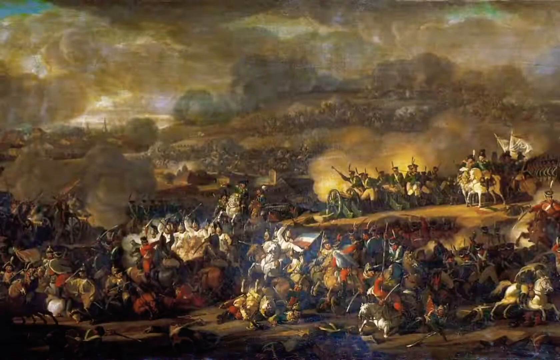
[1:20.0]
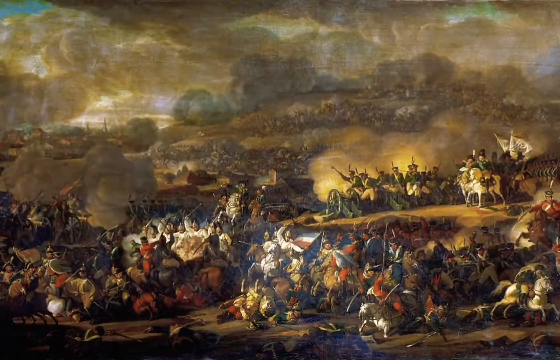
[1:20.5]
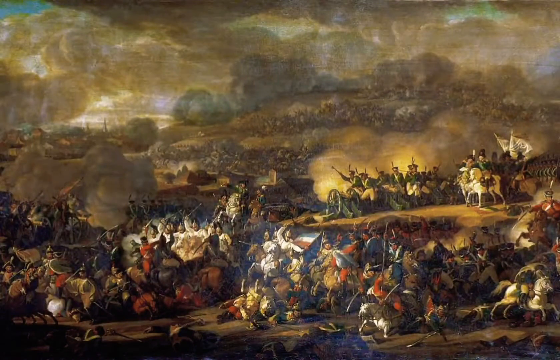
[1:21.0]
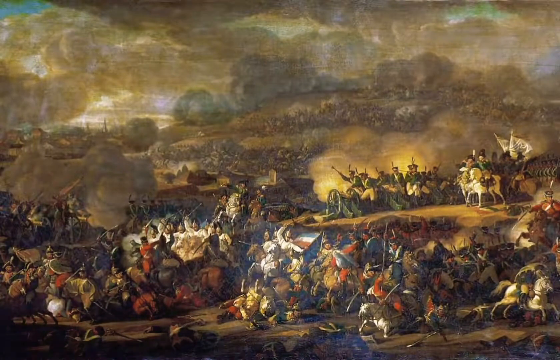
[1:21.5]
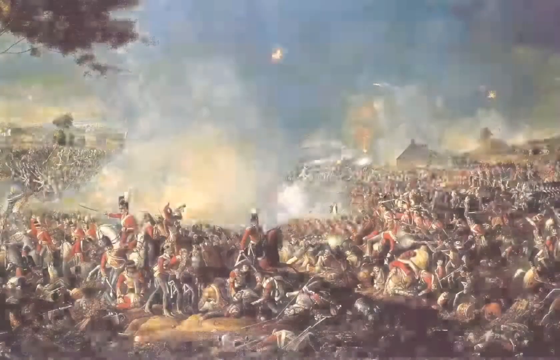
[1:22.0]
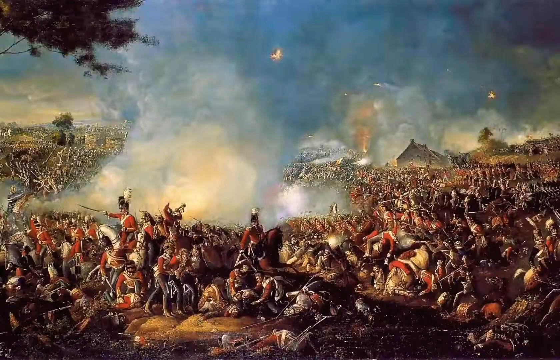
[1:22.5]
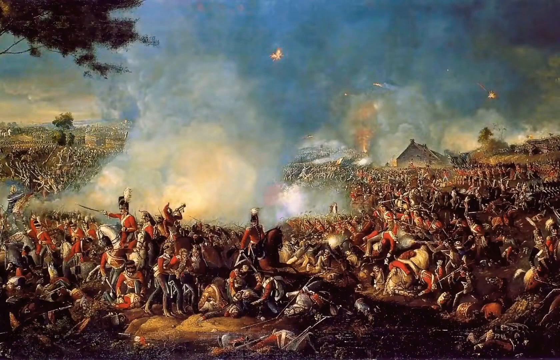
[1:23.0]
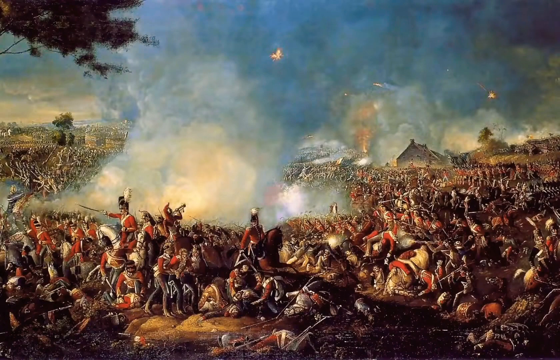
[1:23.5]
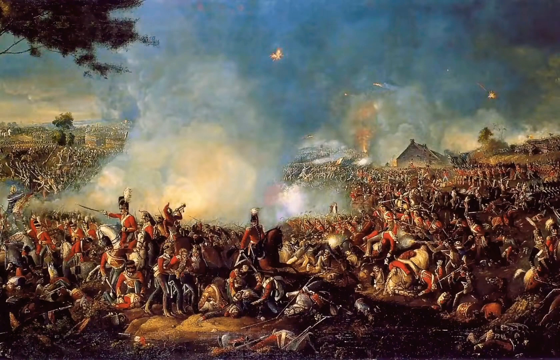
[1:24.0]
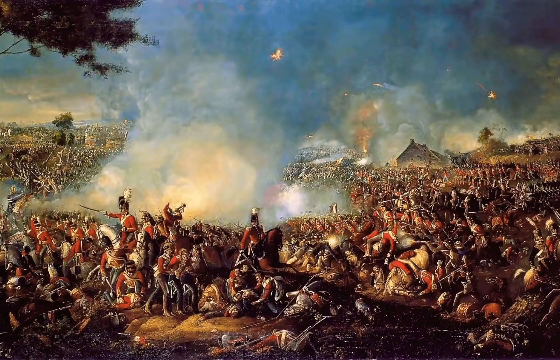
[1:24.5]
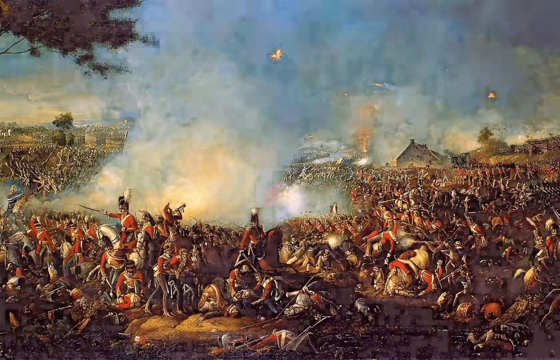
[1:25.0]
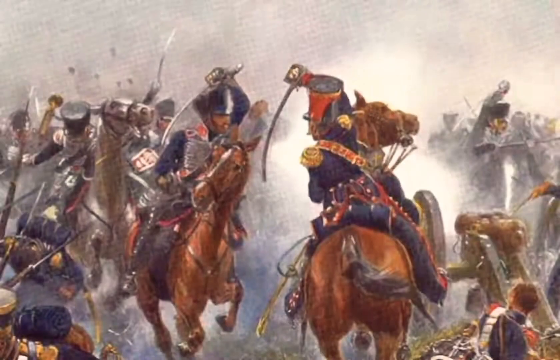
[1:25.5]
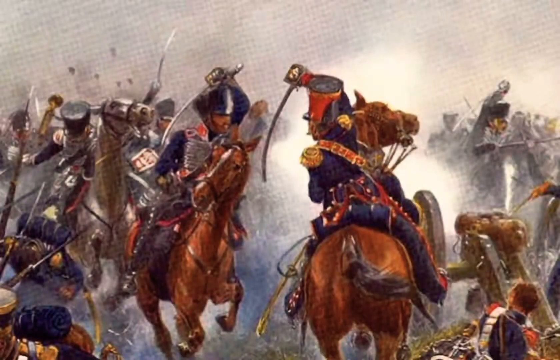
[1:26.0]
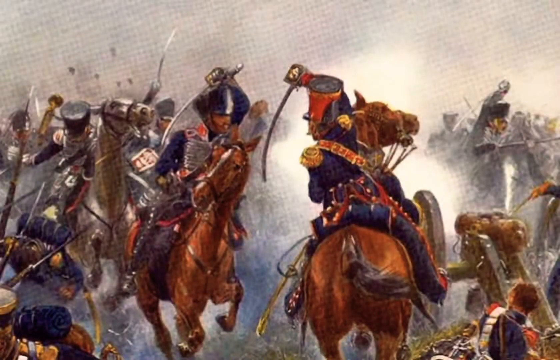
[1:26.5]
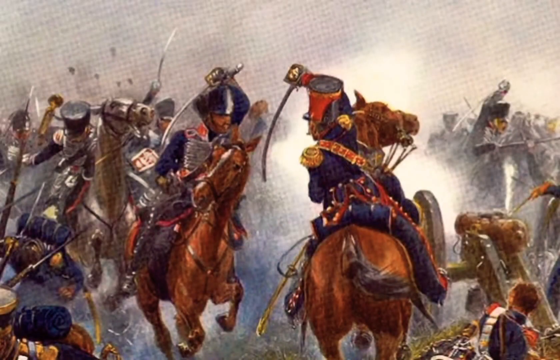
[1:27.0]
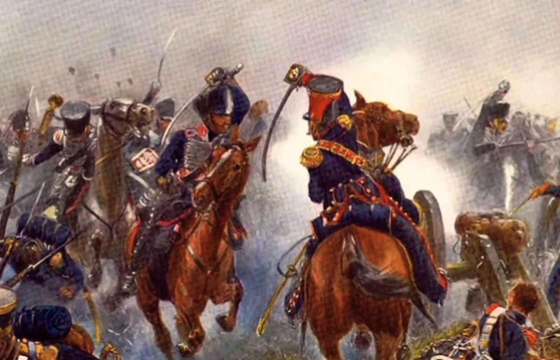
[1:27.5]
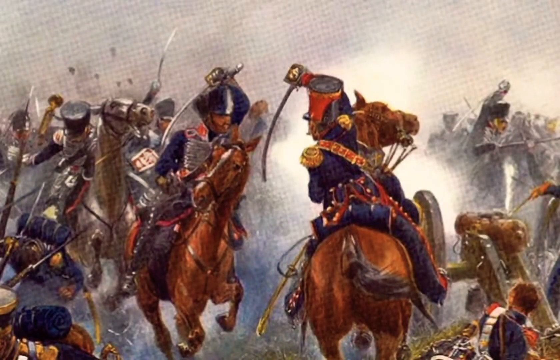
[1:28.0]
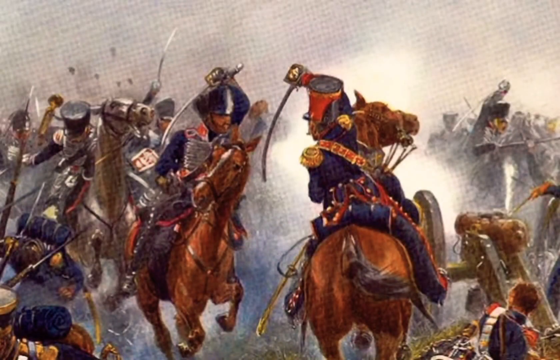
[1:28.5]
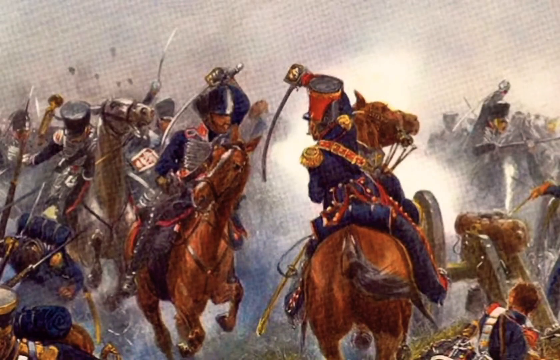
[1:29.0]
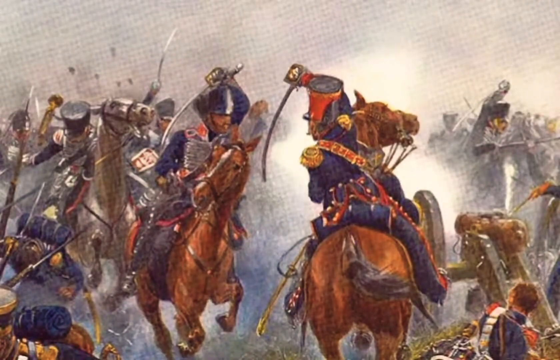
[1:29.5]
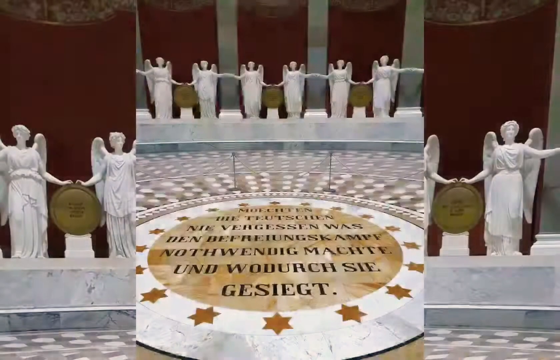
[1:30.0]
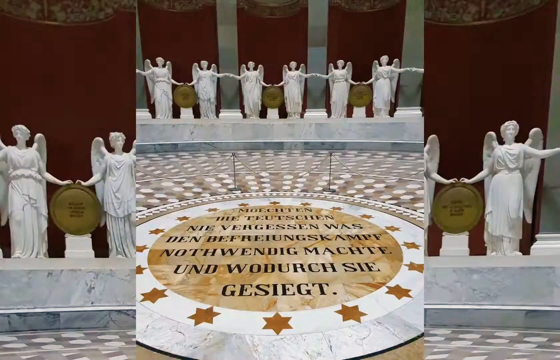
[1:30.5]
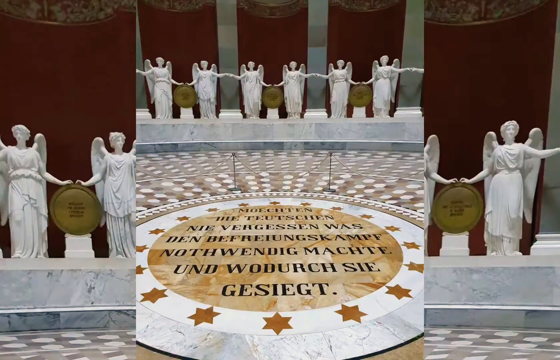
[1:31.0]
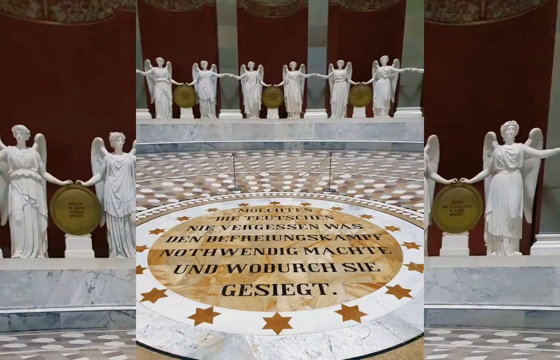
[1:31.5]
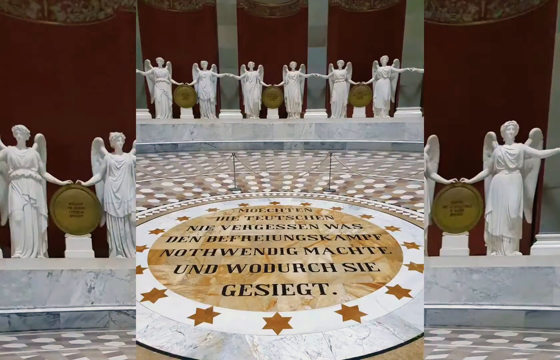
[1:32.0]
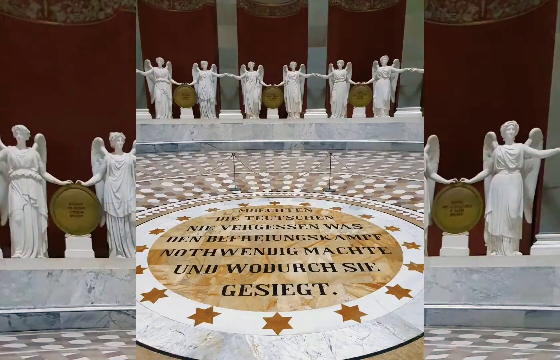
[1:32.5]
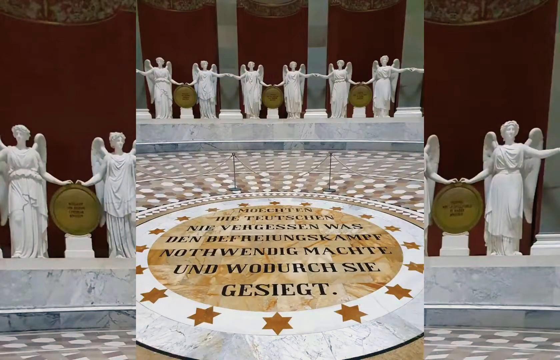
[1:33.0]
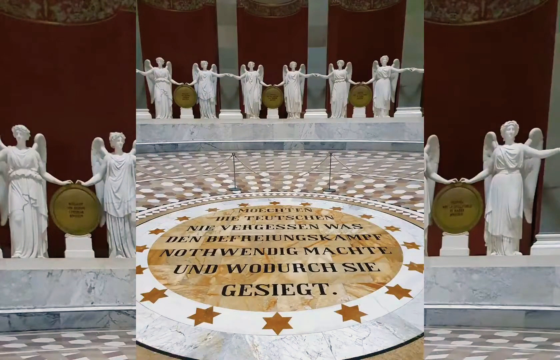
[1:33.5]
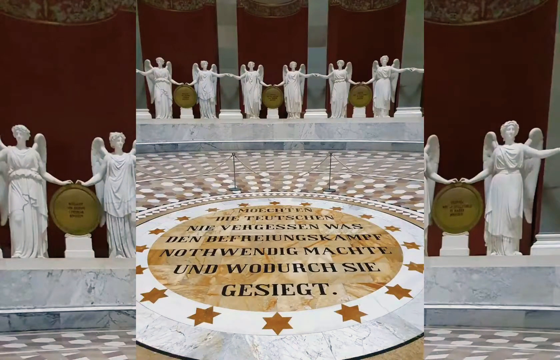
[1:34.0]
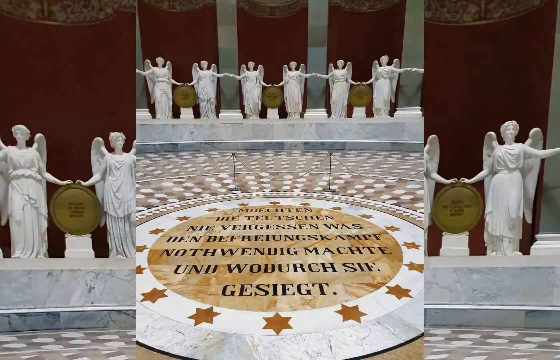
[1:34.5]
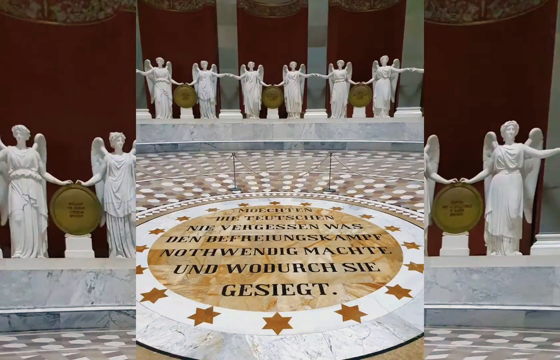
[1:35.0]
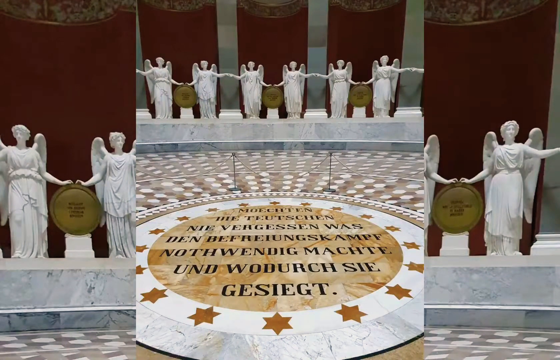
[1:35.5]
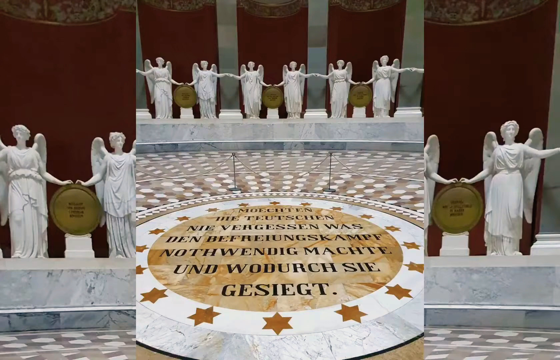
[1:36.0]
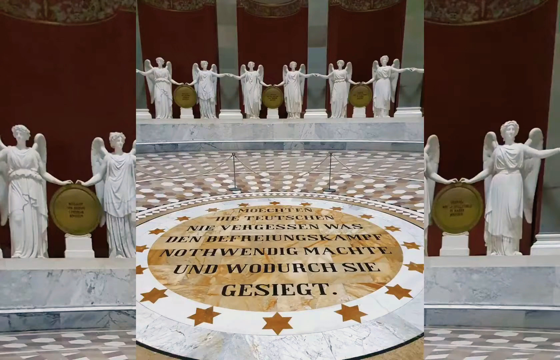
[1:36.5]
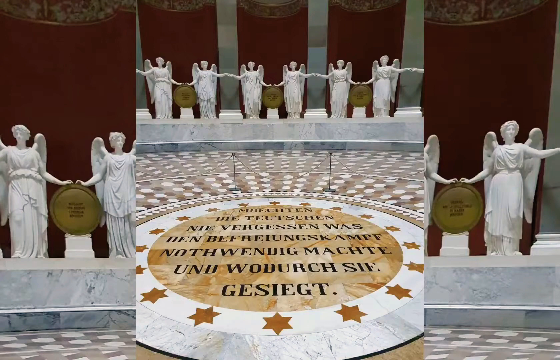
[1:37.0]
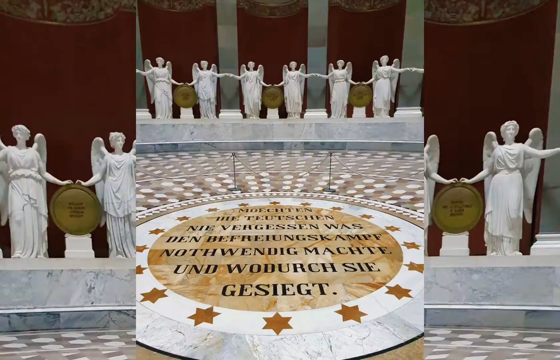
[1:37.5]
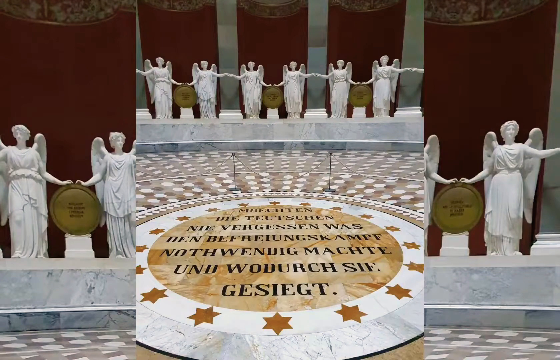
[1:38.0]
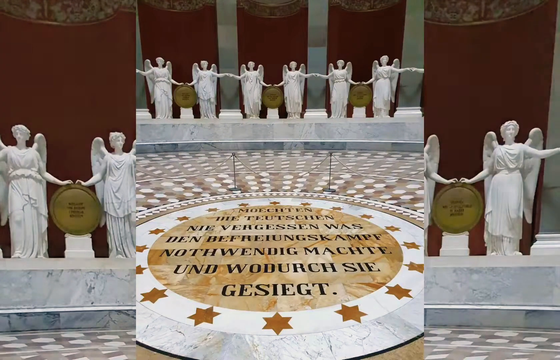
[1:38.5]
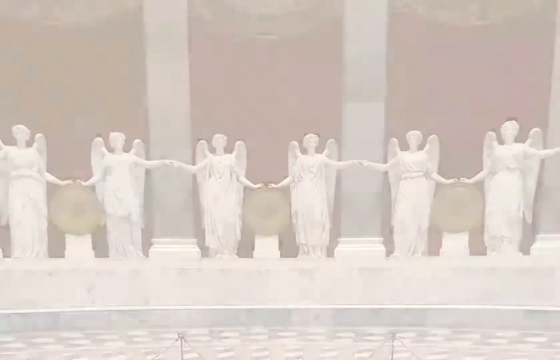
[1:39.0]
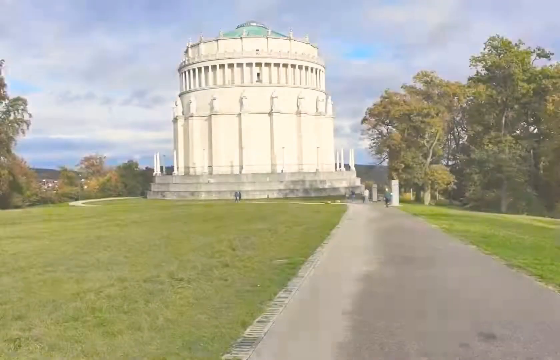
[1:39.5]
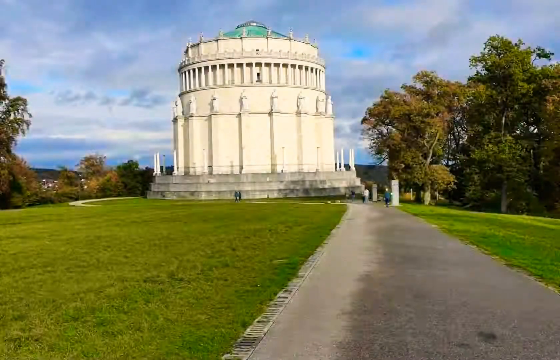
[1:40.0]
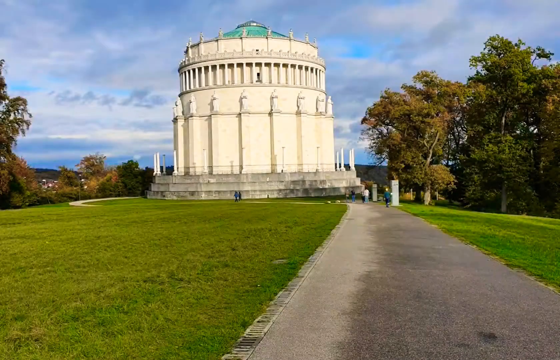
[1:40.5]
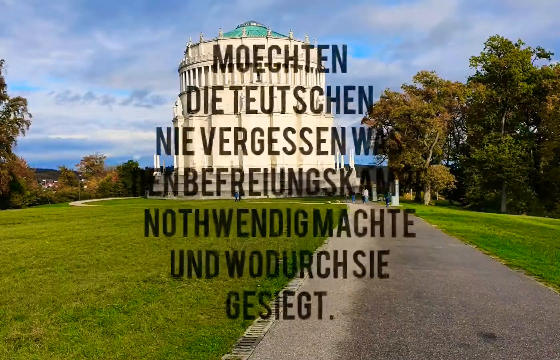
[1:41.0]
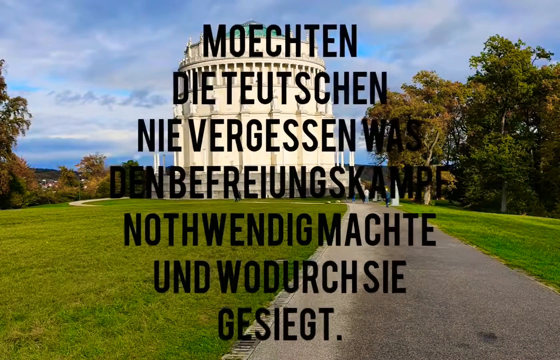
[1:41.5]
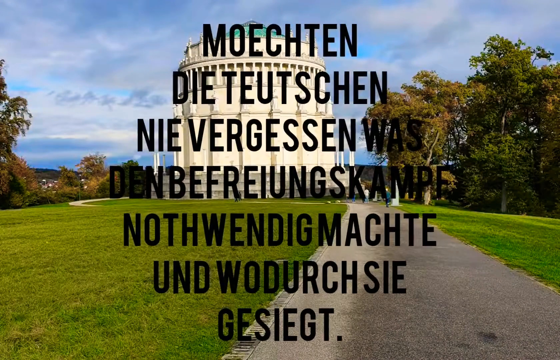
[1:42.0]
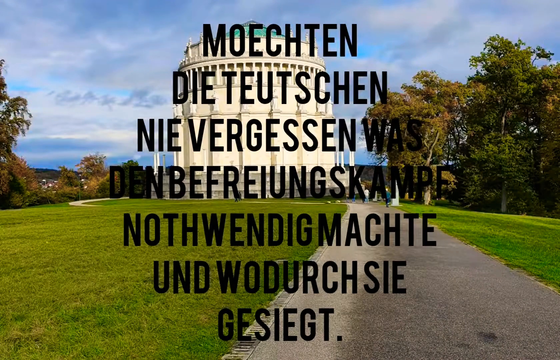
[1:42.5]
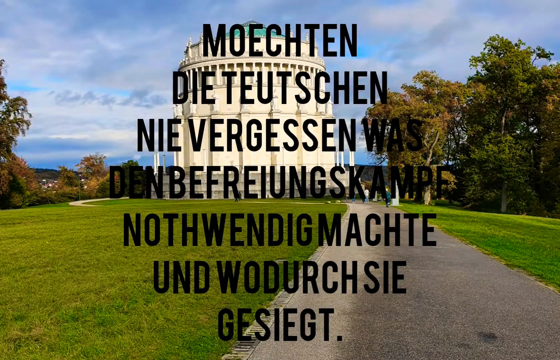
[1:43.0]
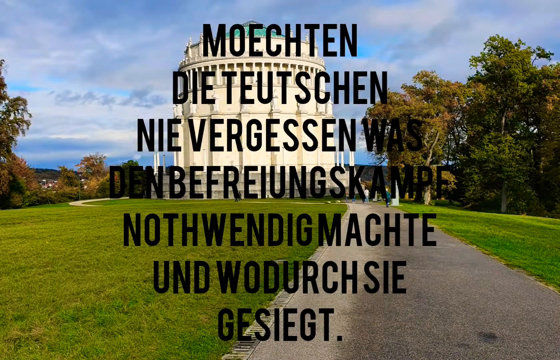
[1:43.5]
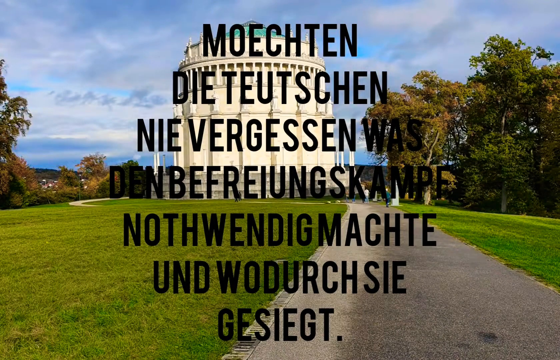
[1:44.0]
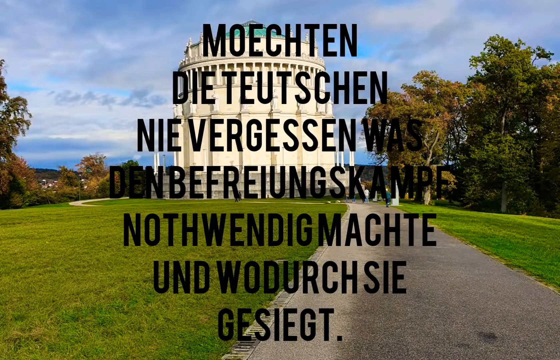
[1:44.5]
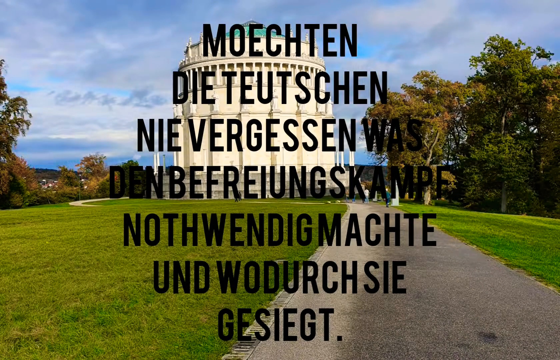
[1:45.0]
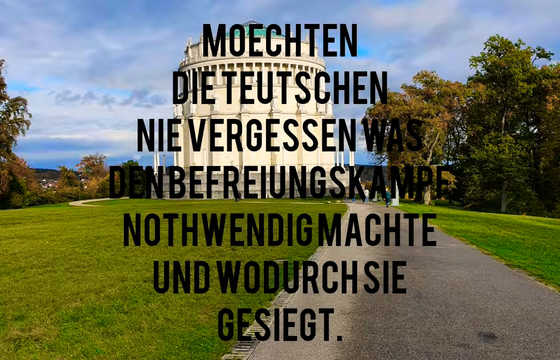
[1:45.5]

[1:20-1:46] A few more battle scene pictures or works of art are shown, depicting Roman battle scenes with lots of smoke and lots of red jackets, followed by a close-up of two men on horseback holding swords and fighting. The view switches back to the interior with the angels; in this still photo the focus is mostly on the bottom circle with words on it, surrounded by stars. Then comes an outside view of the white dome building, a dome by itself with no surrounding buildings. The view looks along a path going toward the white building with its green top on a blue day, with some clouds in the sky, some trees, and green grass in the foreground. Black all-caps sans serif text takes up most of the screen; it might be in German, and what it says is unclear. The building is apparently just a singular dome that one goes into, and it might be some kind of memorial.